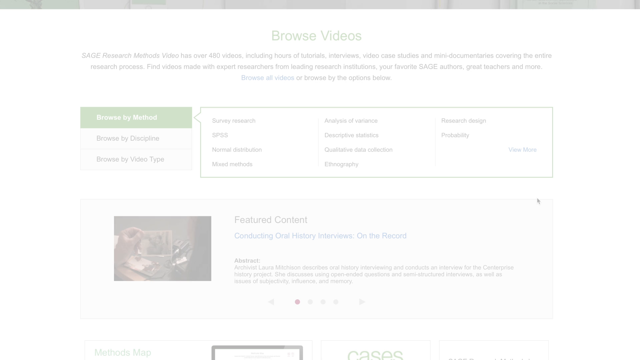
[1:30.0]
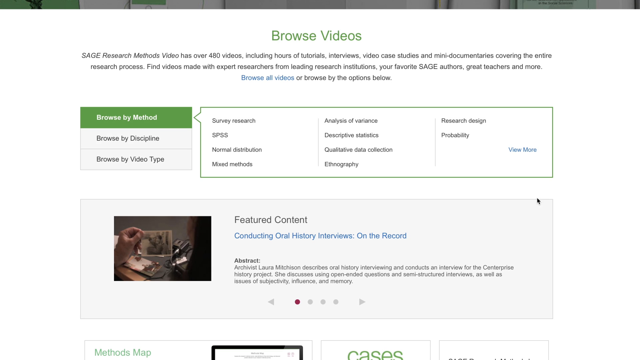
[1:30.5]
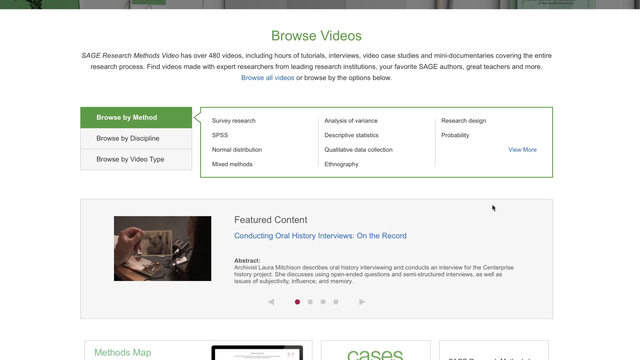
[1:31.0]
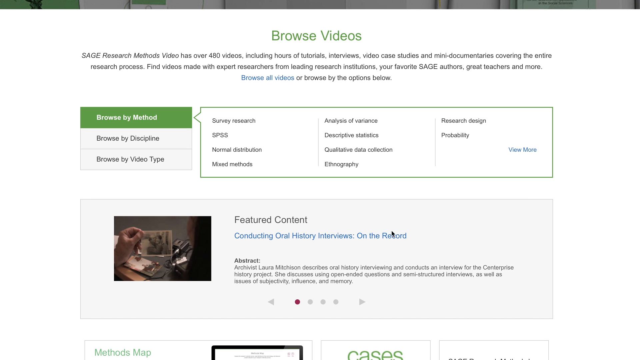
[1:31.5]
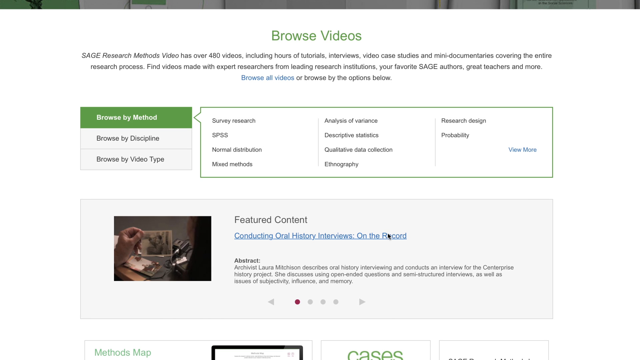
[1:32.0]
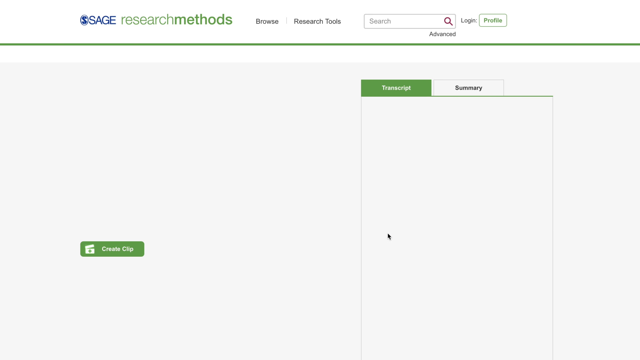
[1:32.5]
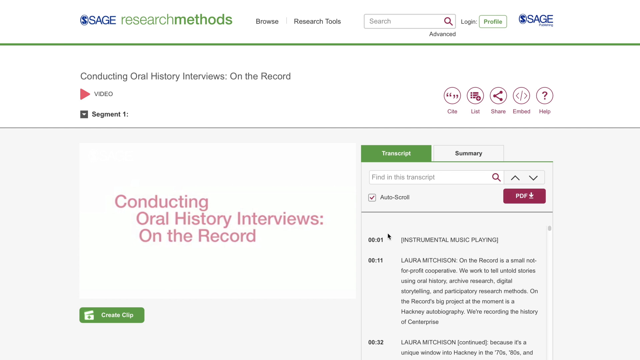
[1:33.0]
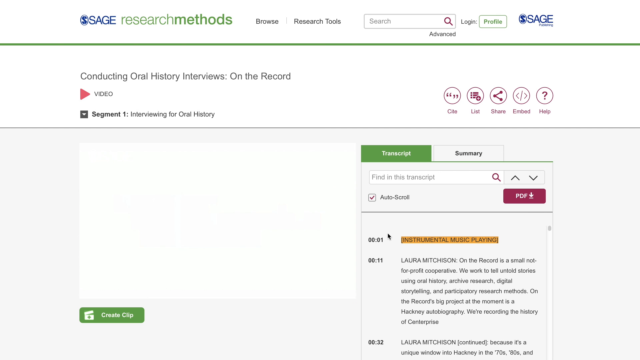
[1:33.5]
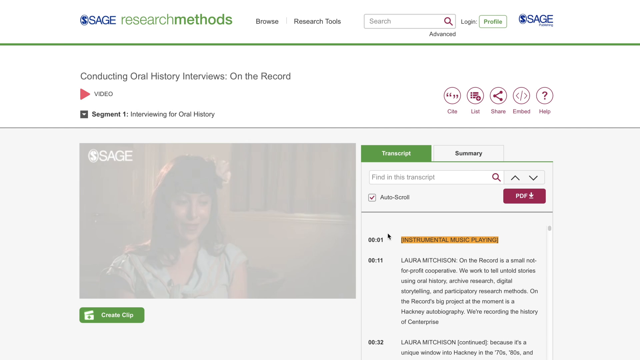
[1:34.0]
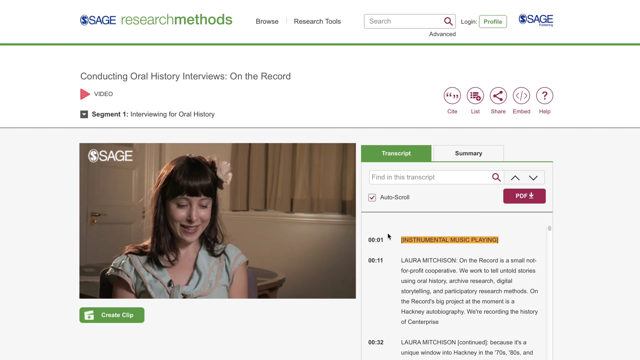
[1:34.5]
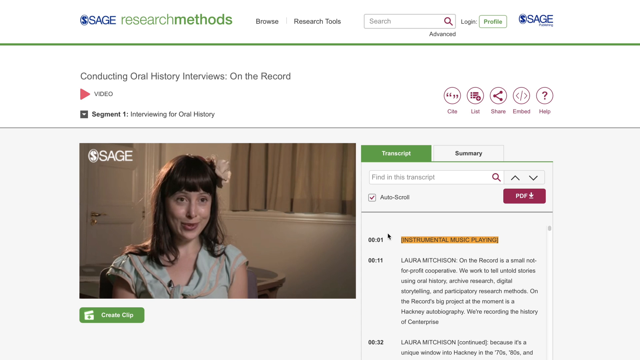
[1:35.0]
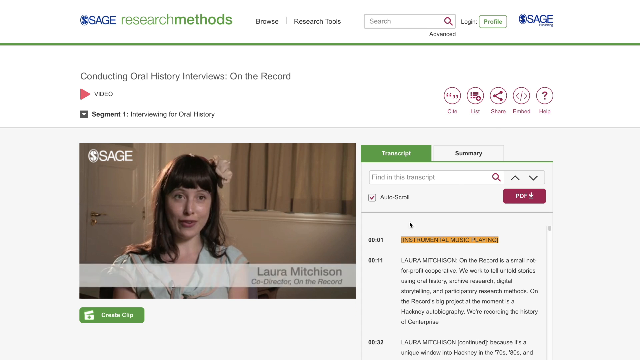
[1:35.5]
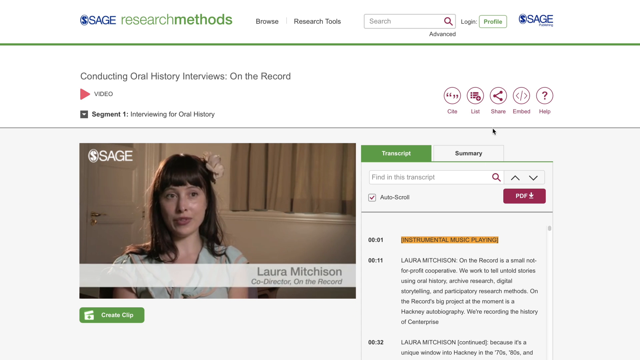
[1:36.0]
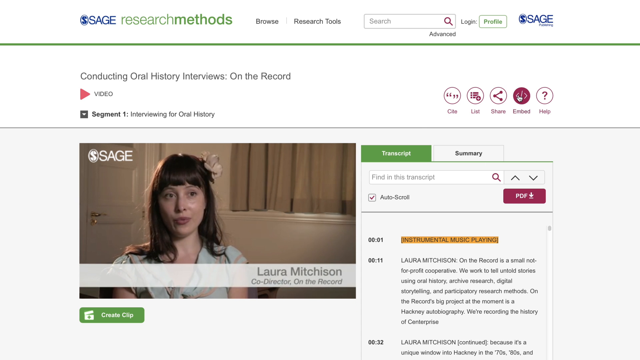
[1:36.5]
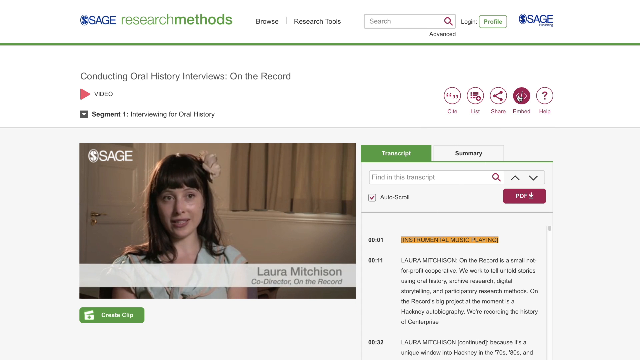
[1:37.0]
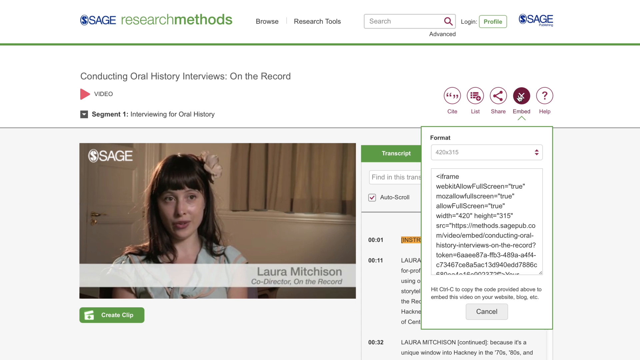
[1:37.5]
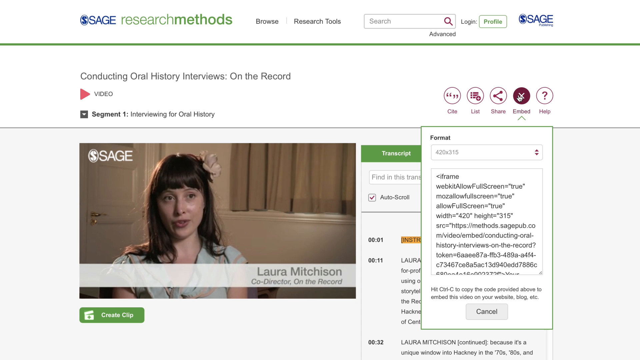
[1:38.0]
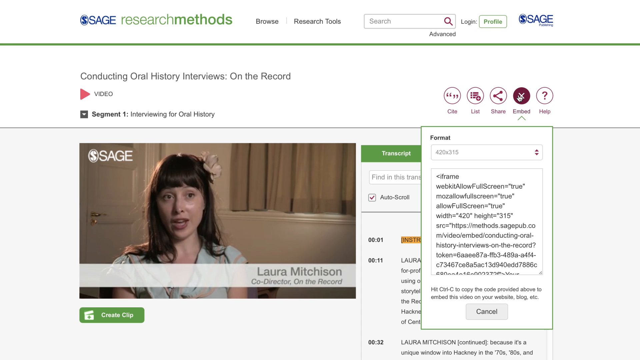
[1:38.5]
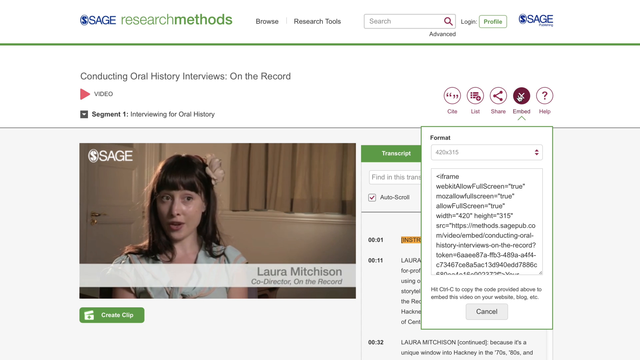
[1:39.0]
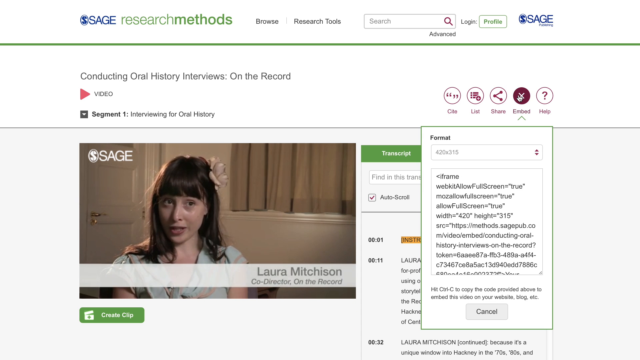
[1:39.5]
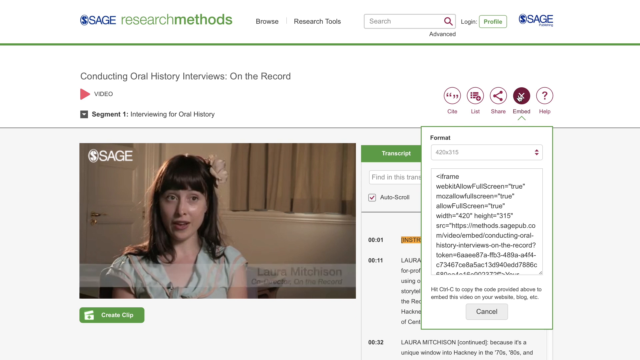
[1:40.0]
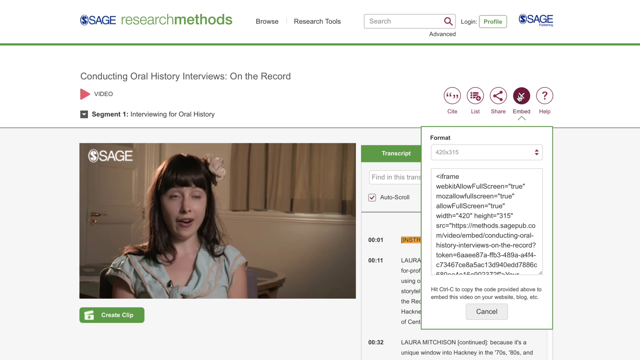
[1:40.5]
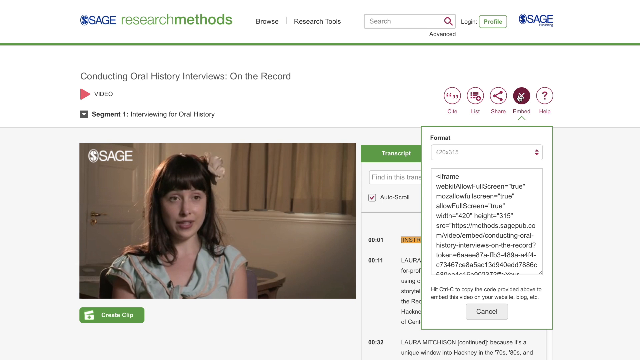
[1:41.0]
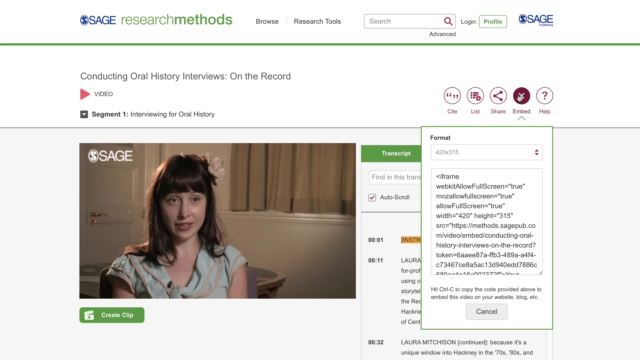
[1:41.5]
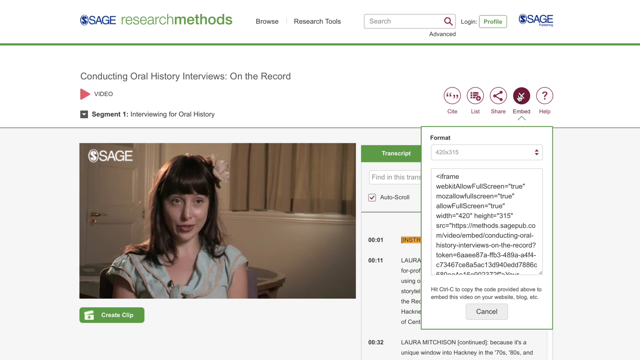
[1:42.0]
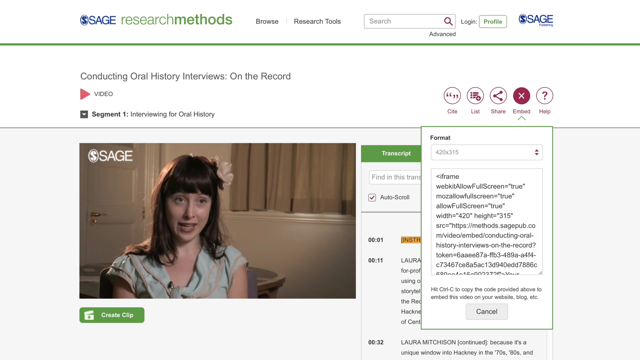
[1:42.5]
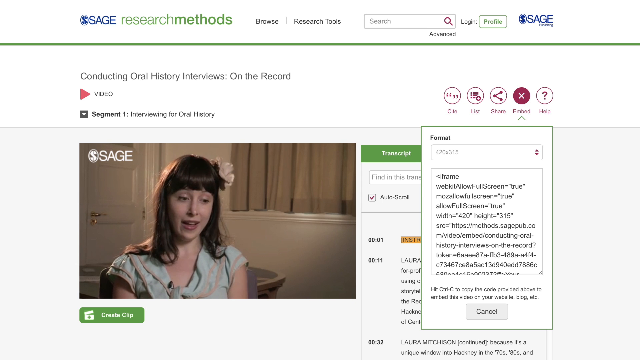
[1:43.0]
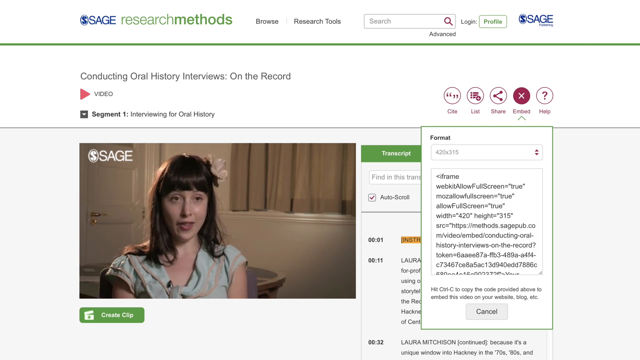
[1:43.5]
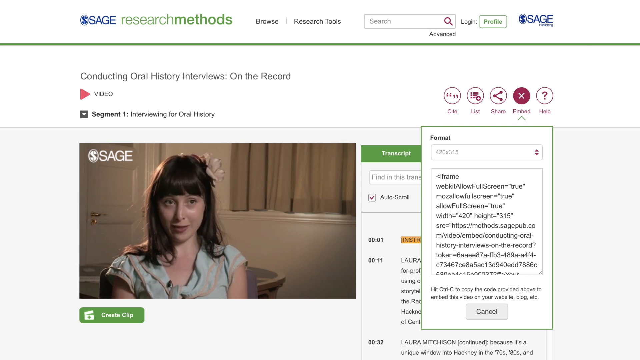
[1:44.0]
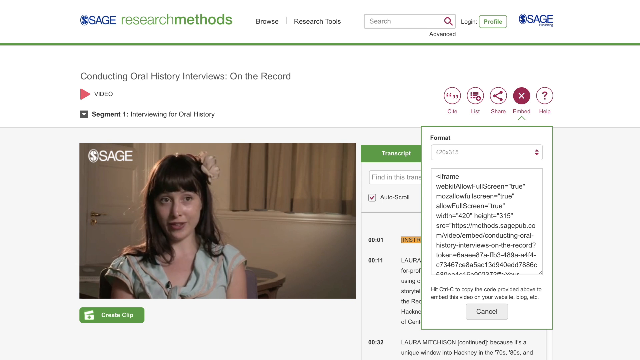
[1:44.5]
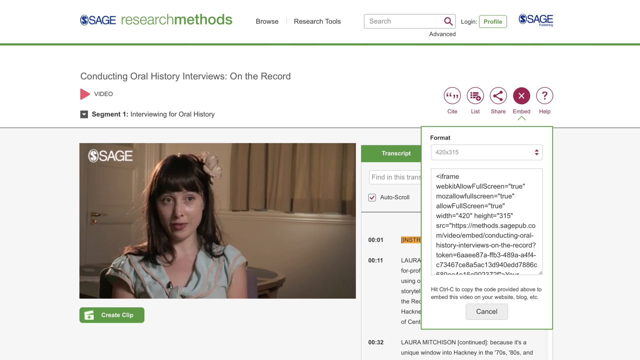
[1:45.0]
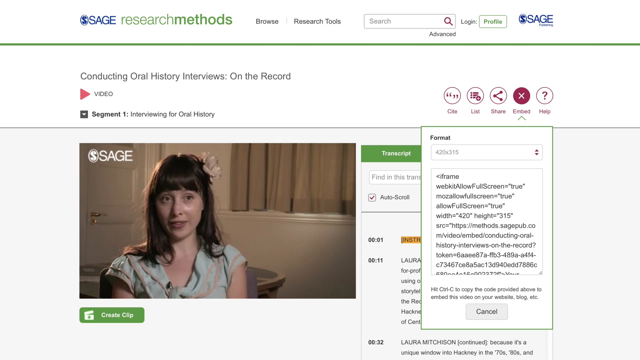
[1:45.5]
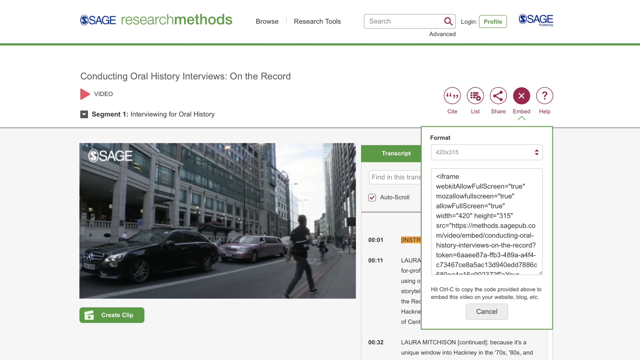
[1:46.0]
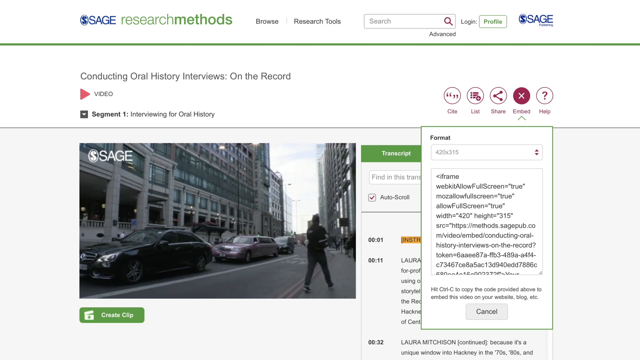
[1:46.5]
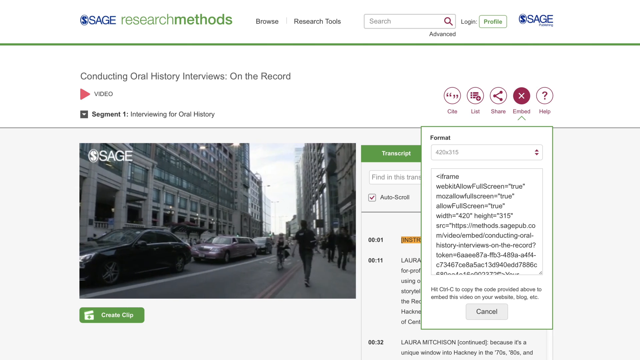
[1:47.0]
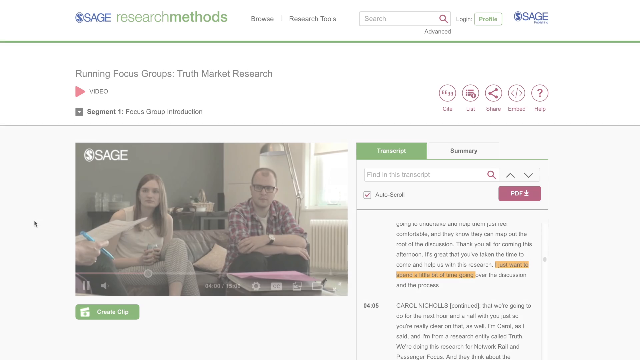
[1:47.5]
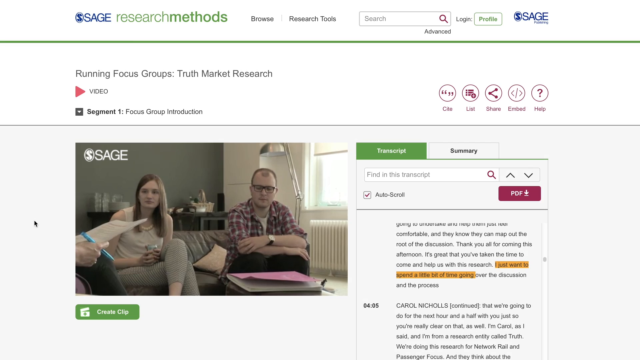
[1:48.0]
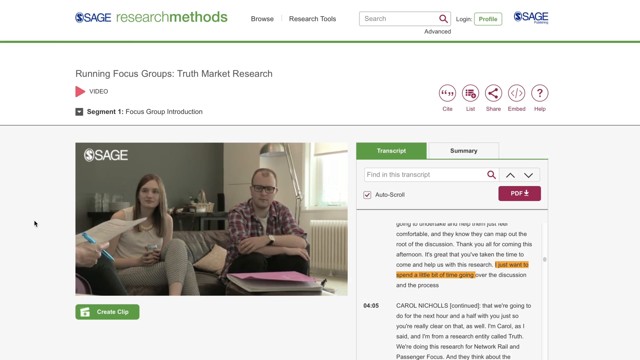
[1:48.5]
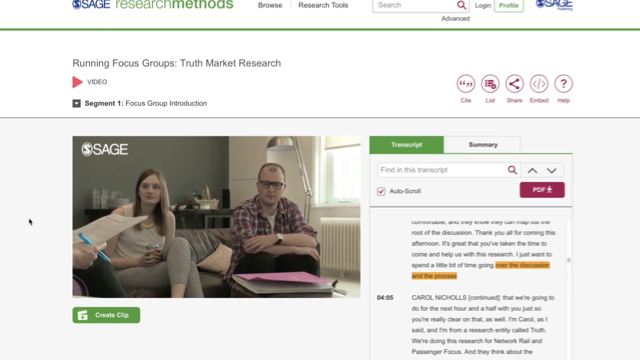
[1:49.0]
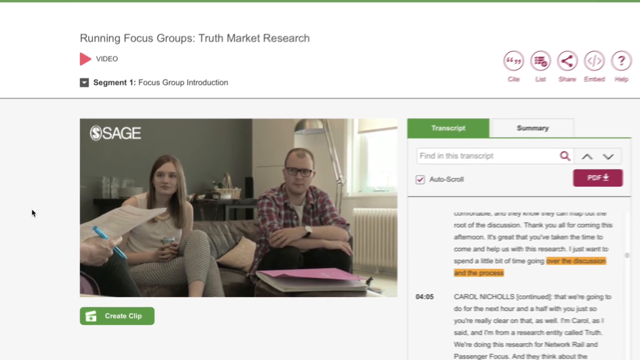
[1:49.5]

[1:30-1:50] The website has options for history, watching videos, sharing, liking and asking questions, and offers different types of videos.